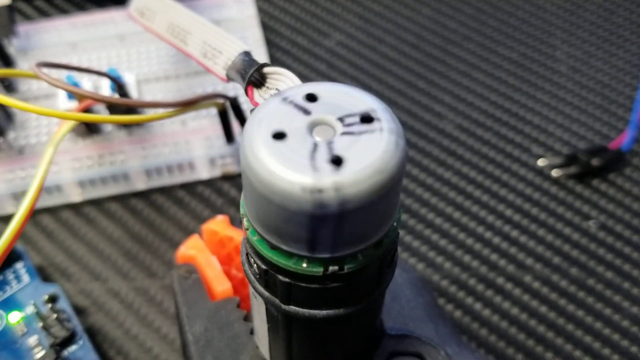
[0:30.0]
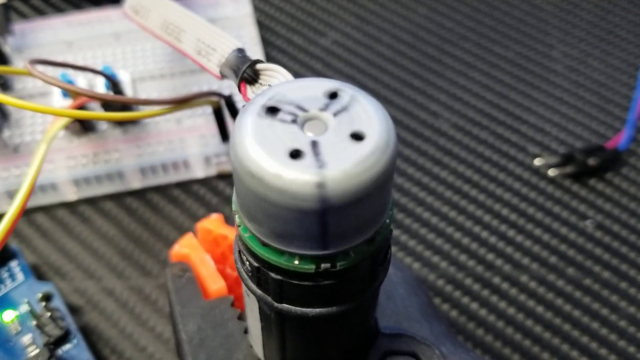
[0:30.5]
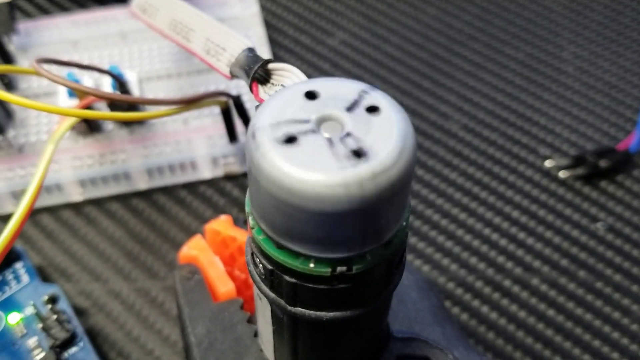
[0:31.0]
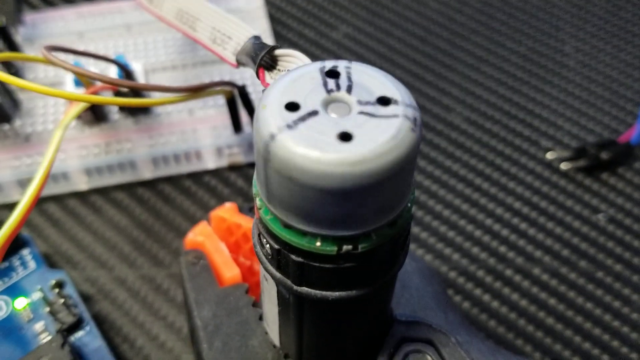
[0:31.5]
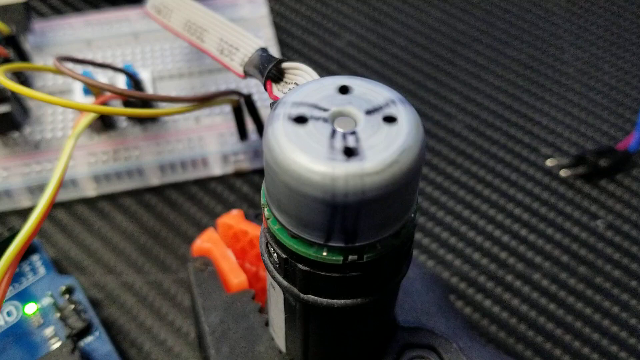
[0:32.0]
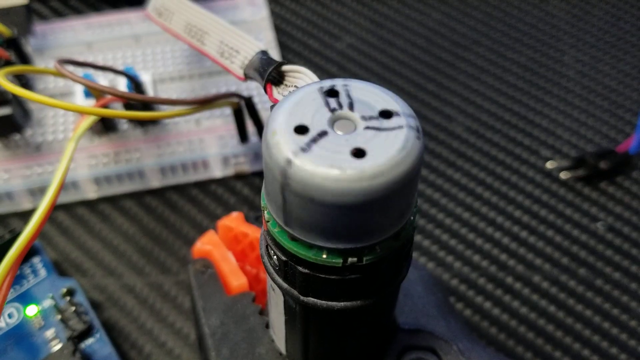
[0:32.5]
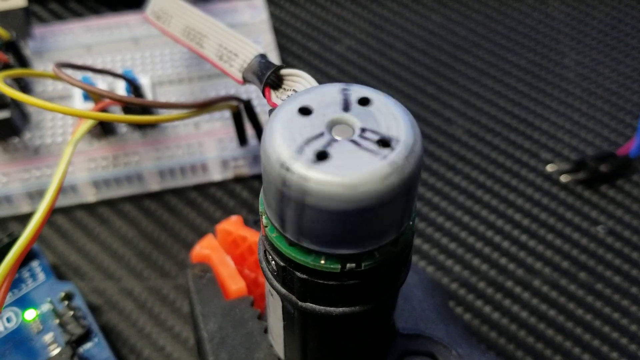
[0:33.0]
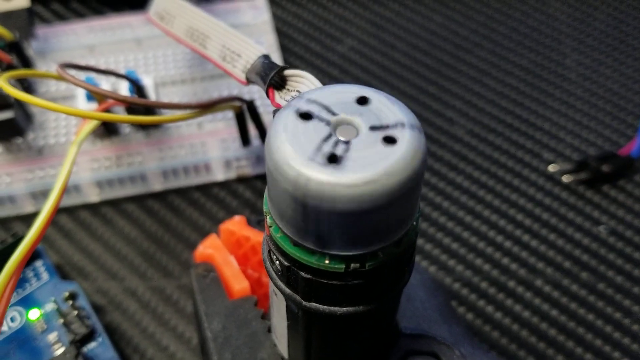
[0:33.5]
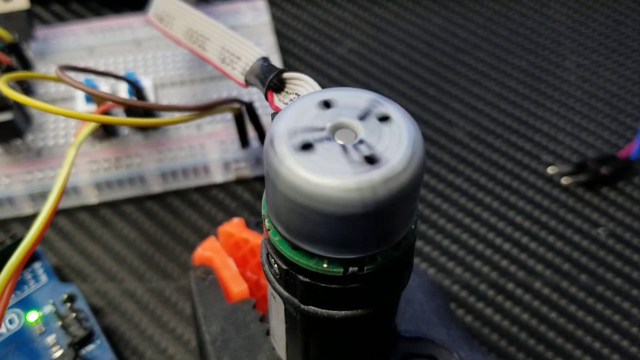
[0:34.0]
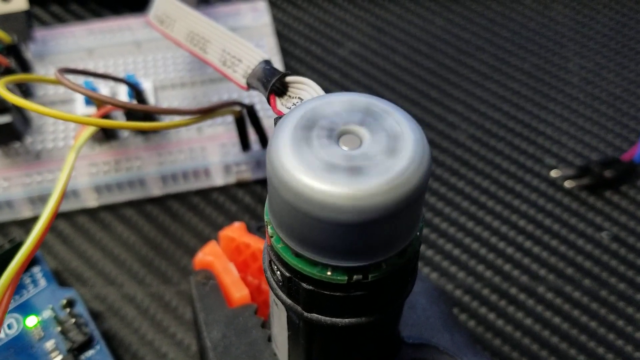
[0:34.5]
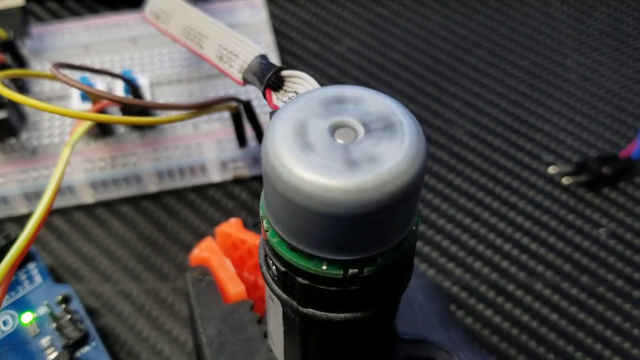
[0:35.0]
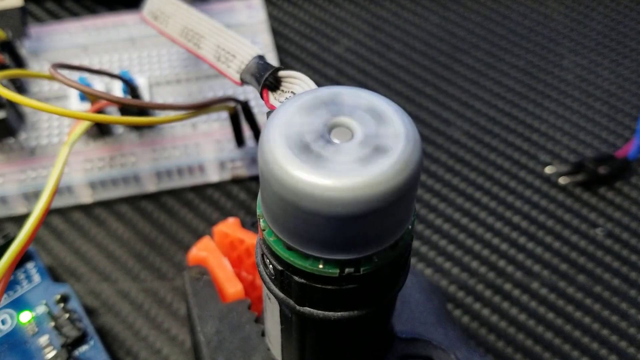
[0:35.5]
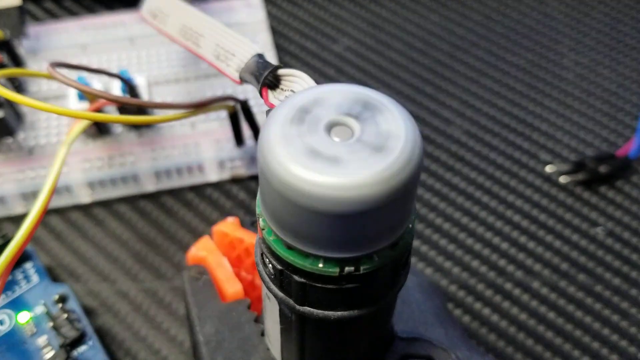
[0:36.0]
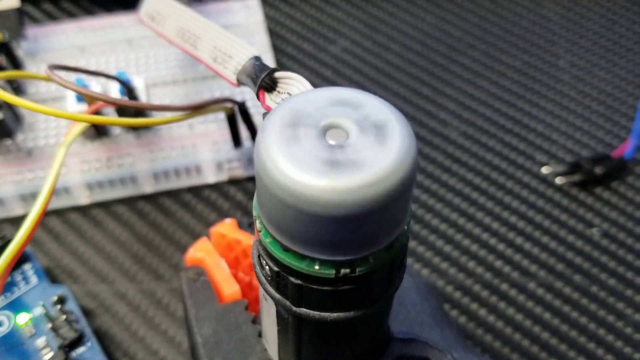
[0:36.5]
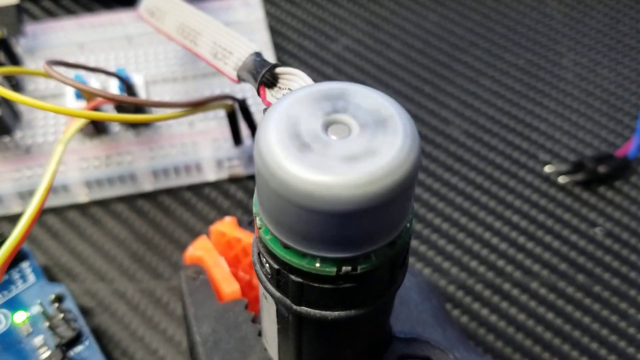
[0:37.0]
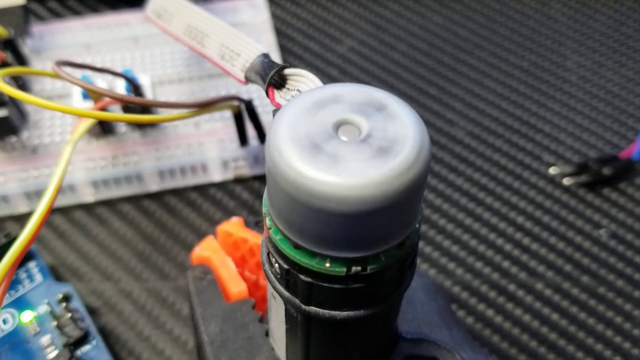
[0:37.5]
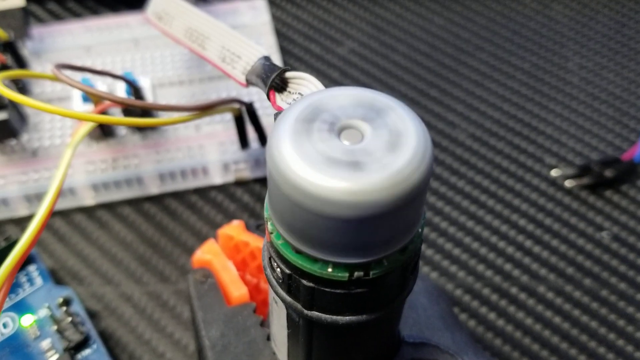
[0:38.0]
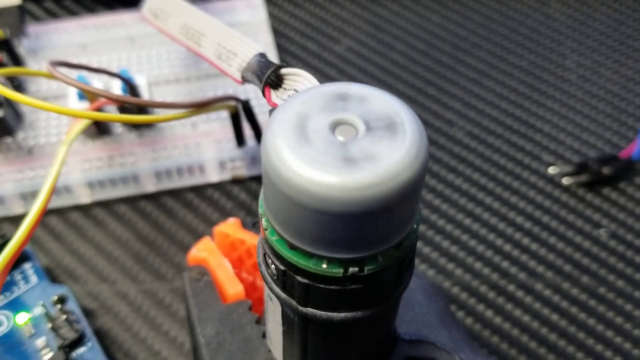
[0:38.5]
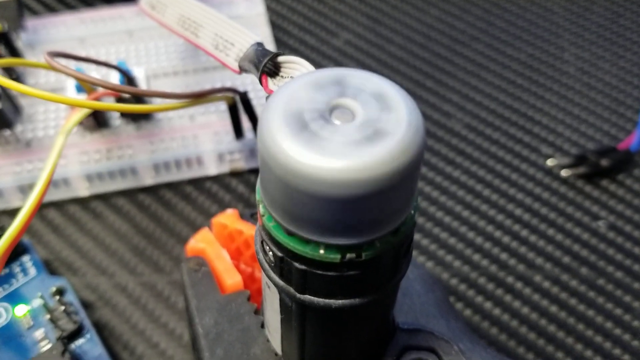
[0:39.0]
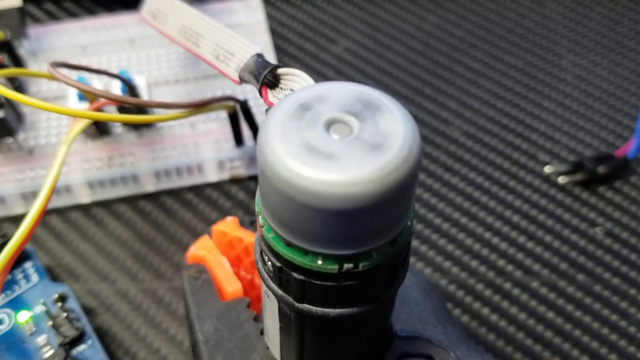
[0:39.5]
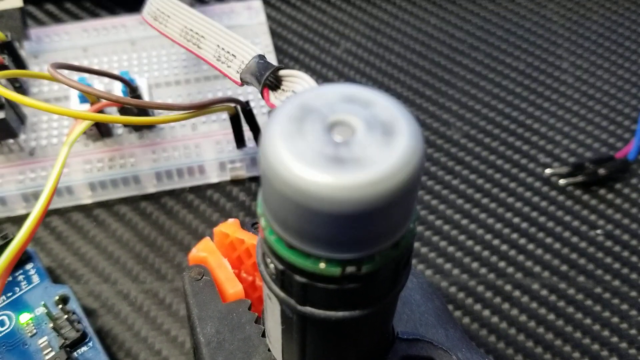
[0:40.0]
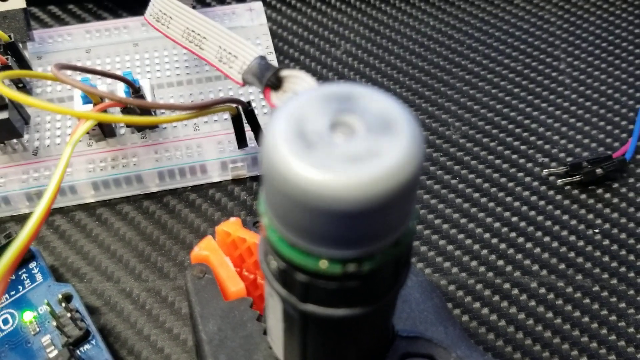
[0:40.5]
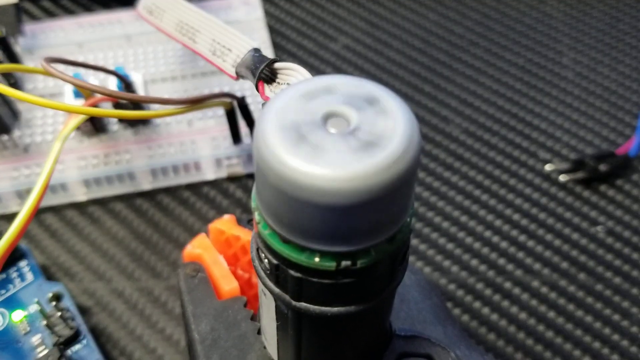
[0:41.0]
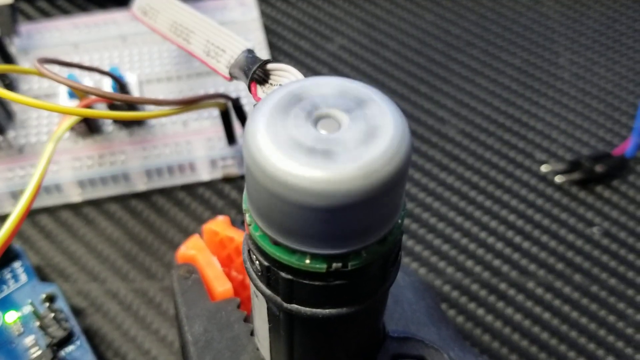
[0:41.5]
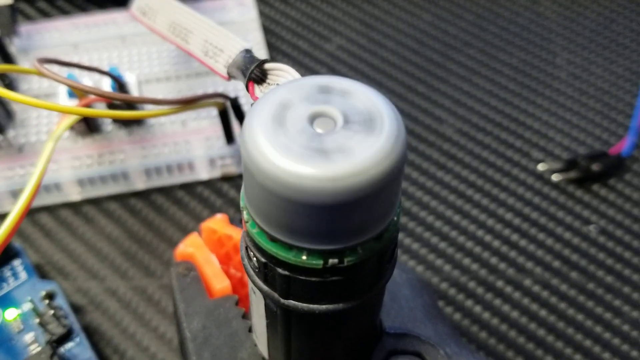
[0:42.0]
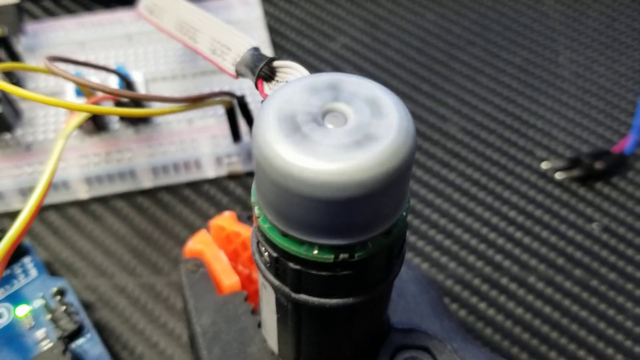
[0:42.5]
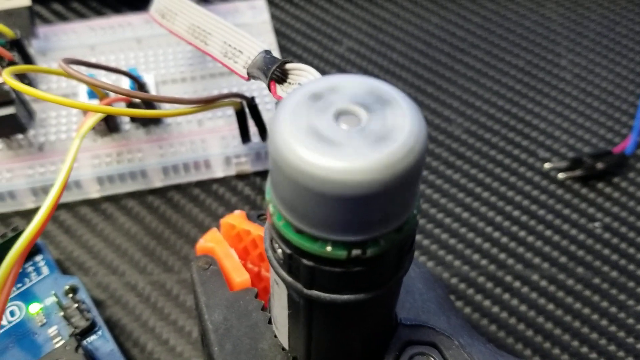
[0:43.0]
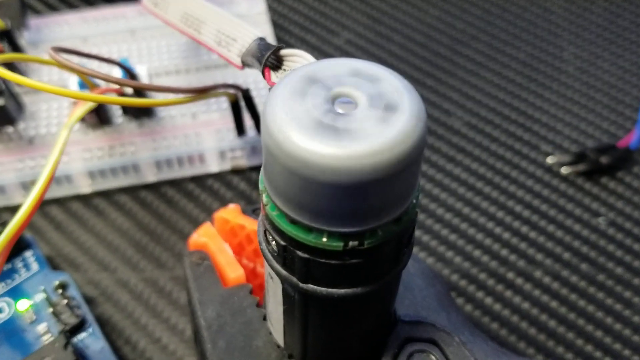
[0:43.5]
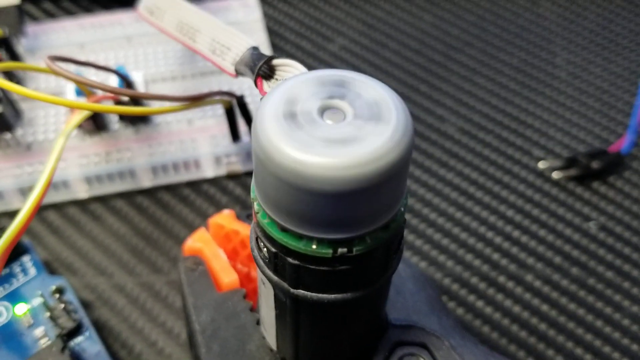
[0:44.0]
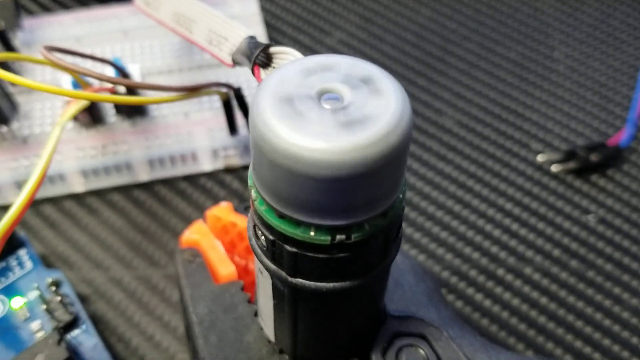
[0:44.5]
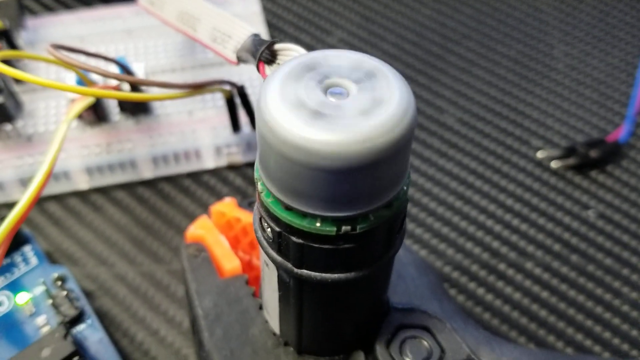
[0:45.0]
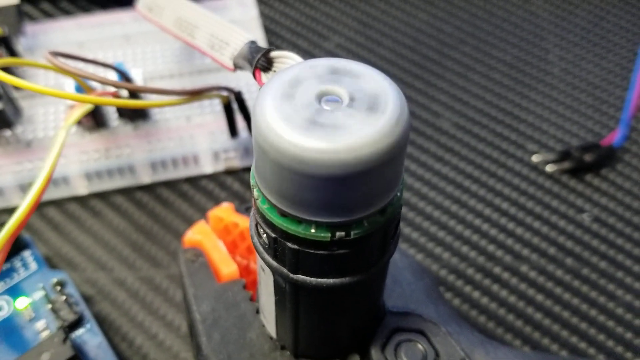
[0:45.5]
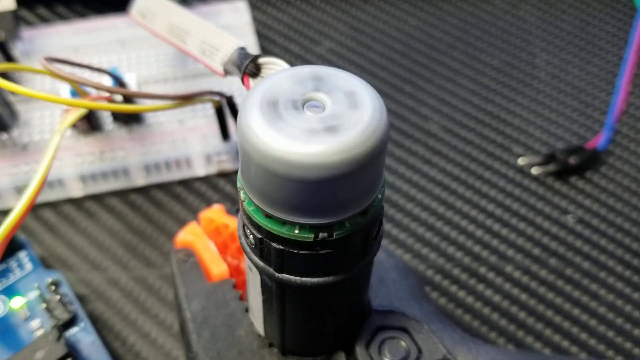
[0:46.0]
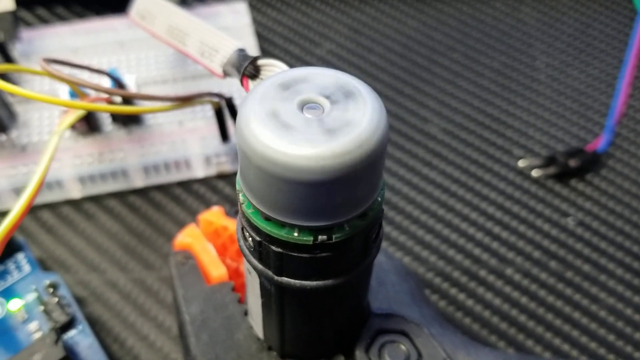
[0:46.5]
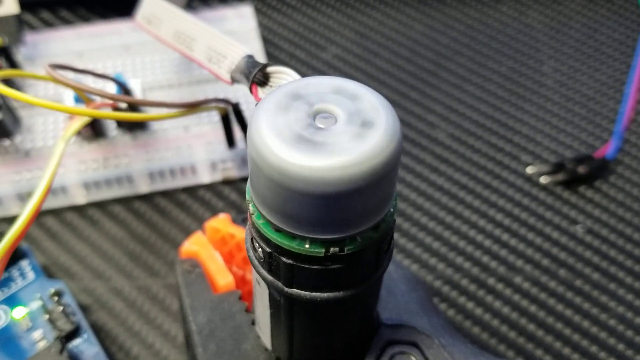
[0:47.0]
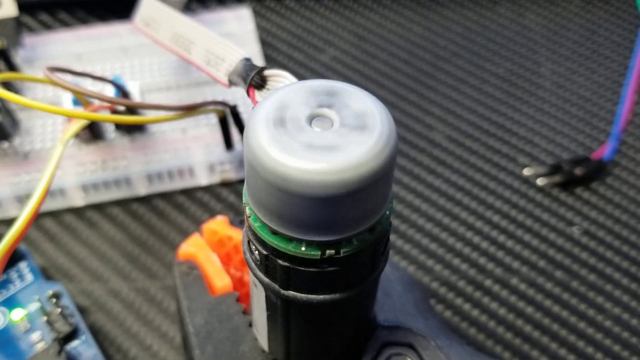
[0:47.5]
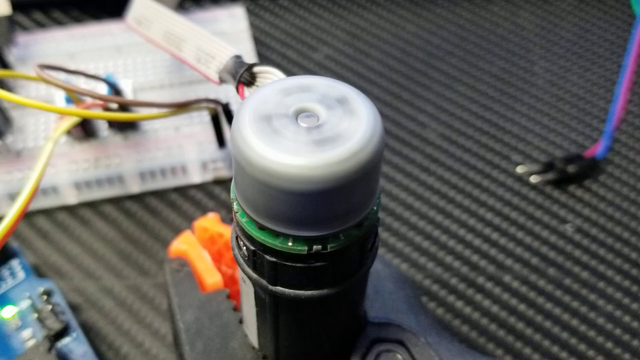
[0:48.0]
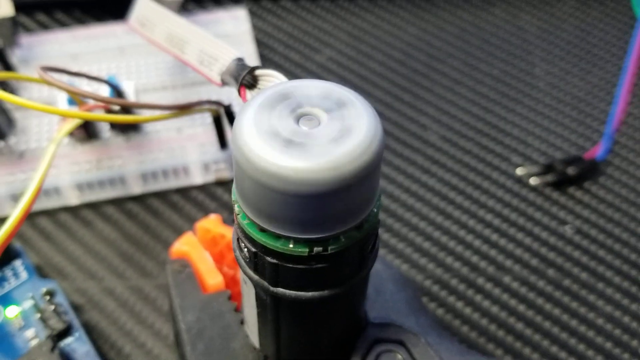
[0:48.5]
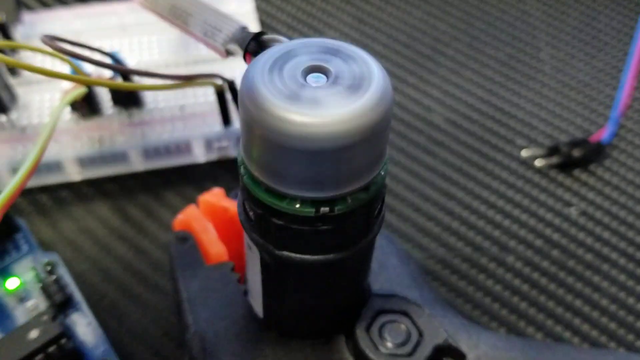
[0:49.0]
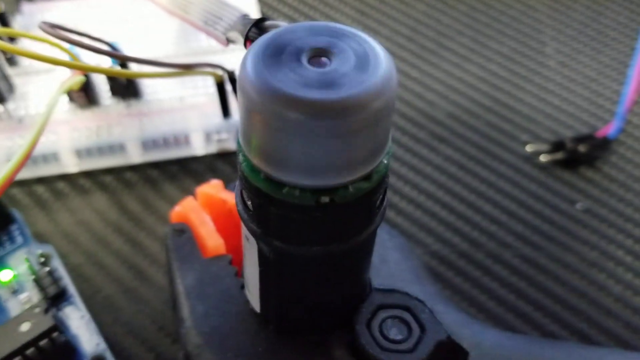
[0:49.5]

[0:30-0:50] A cylindrical device is propped up by a pair of black pliers with orange tips, which are resting on top of a textured black table. The top of the device rotates smoothly counterclockwise, then gradually speeds up until it reaches its maximum counterclockwise speed. To the right, a cable rests on top of the table; it appears to have two prongs, the left one attached to a red cable and the right one attached to a blue cable. A cable also runs out of the rotating device; it seems to be a thin, flat wire made of various tiny wires tied together, mostly white, with the last wire at the end red.